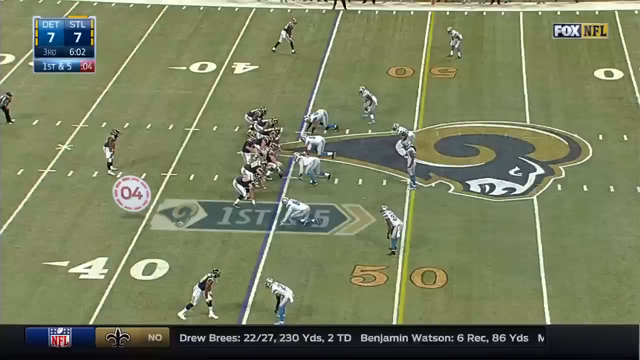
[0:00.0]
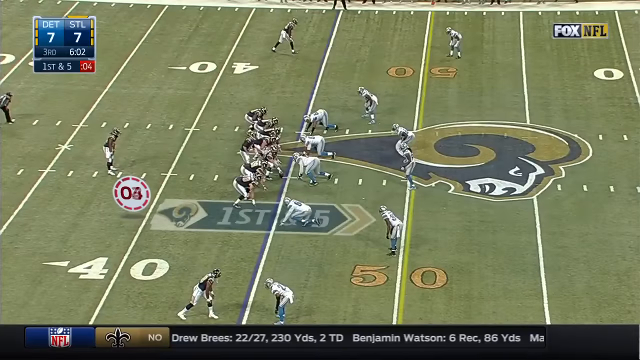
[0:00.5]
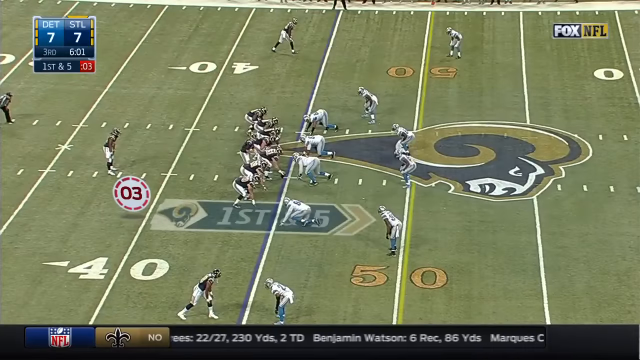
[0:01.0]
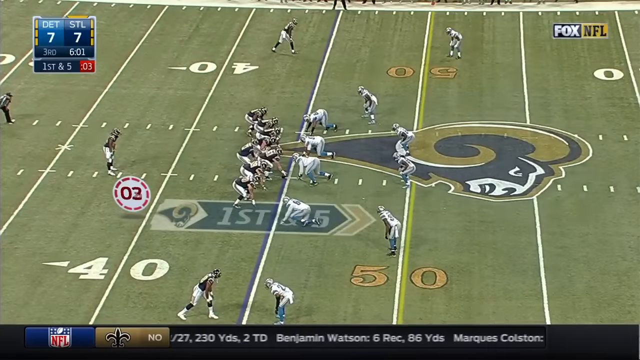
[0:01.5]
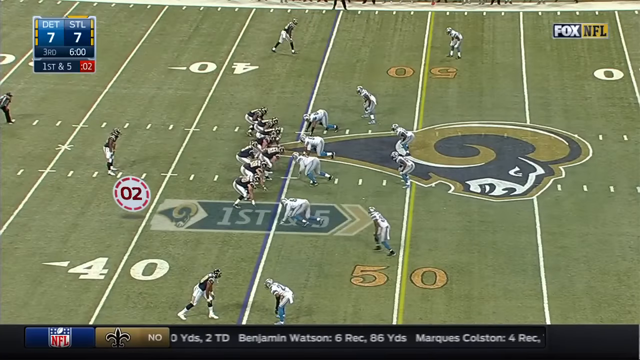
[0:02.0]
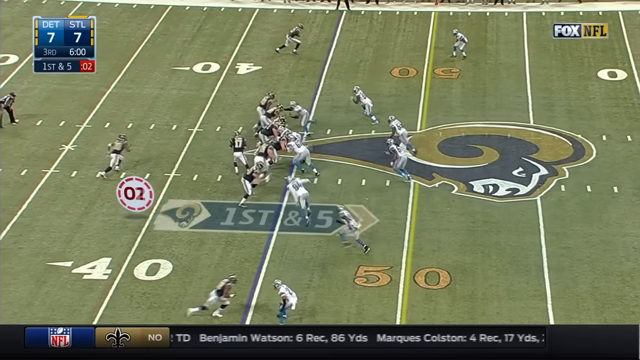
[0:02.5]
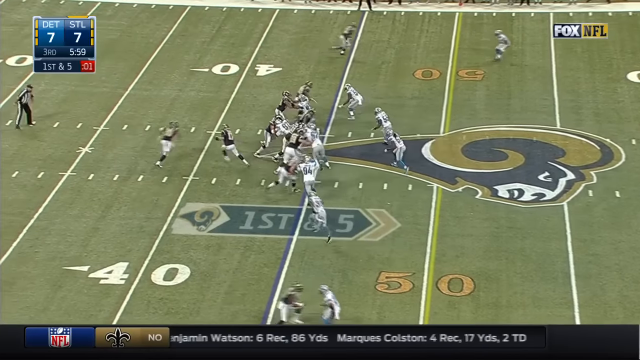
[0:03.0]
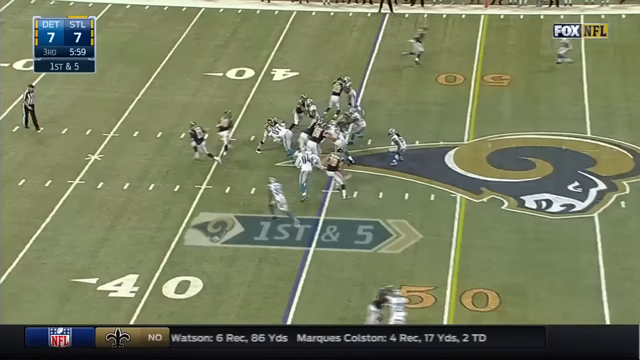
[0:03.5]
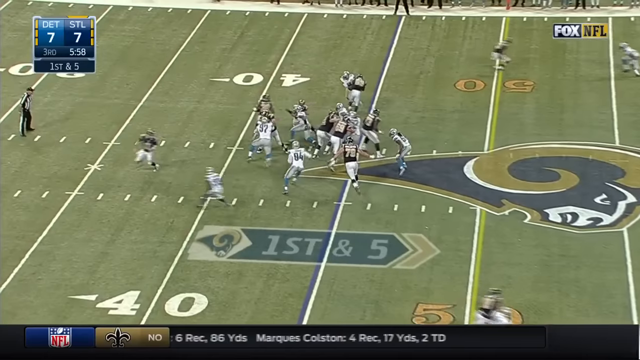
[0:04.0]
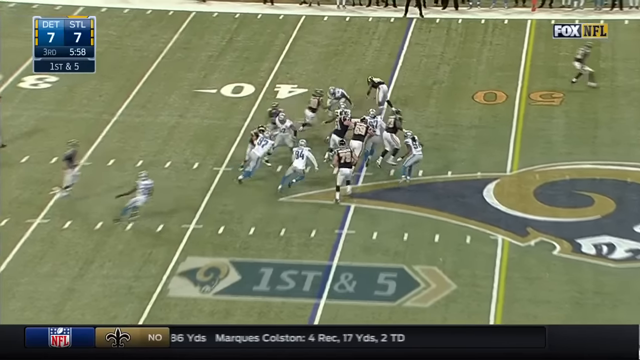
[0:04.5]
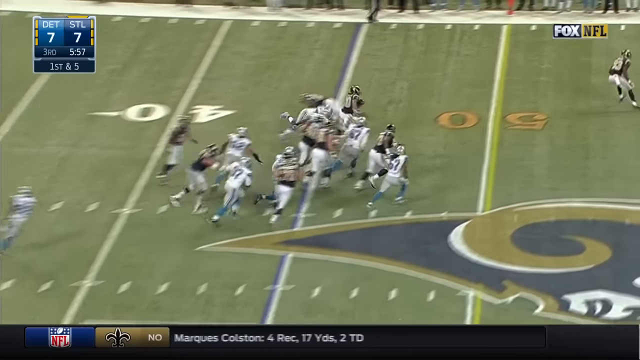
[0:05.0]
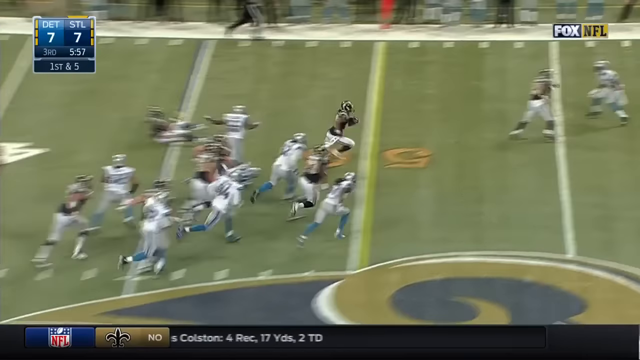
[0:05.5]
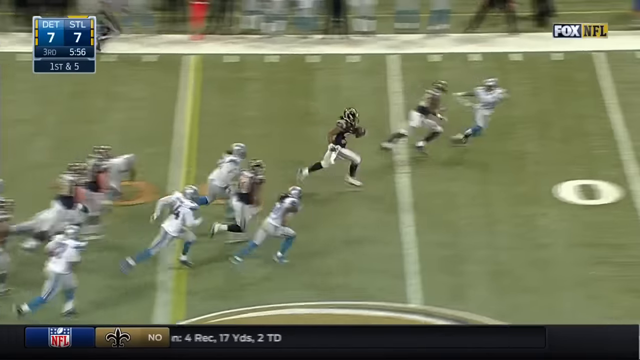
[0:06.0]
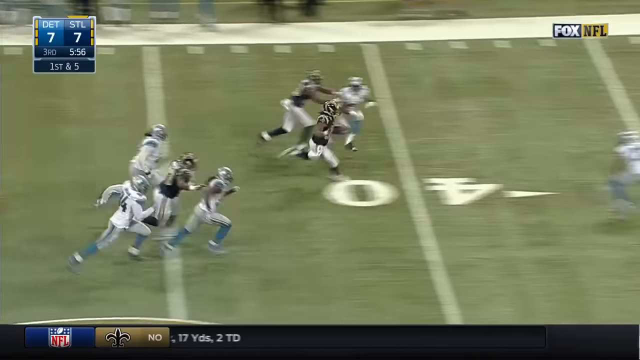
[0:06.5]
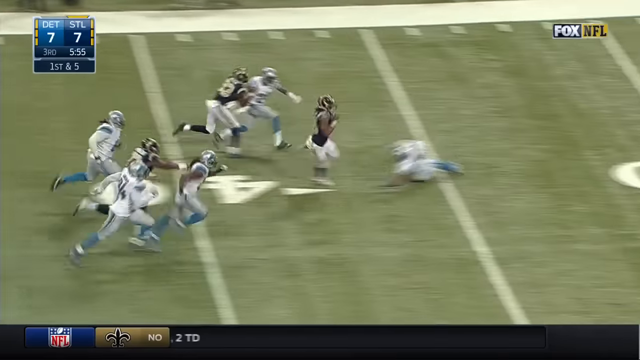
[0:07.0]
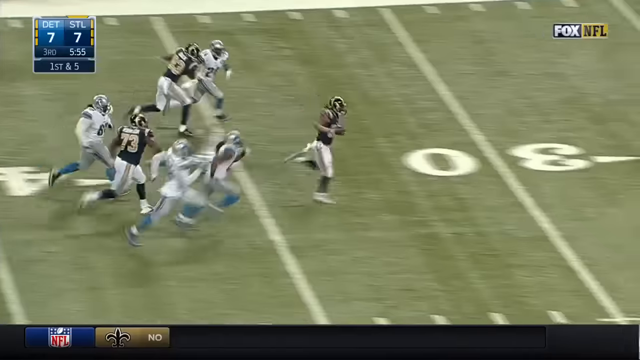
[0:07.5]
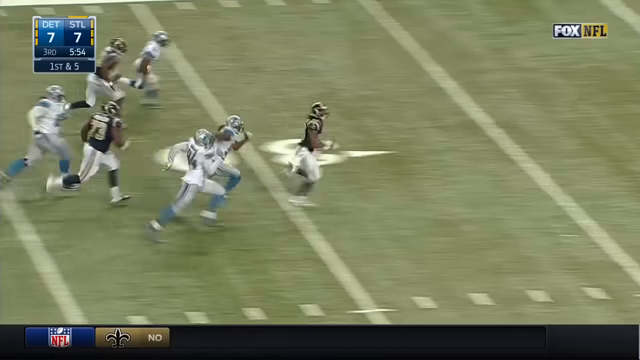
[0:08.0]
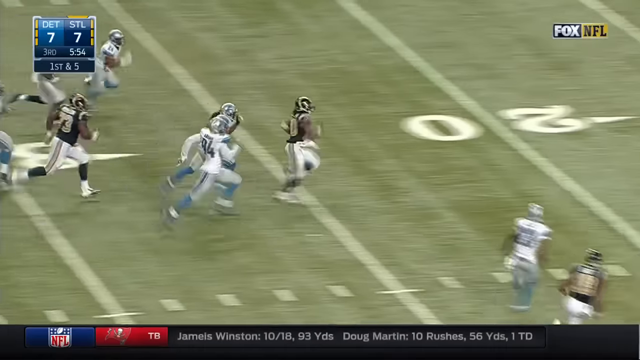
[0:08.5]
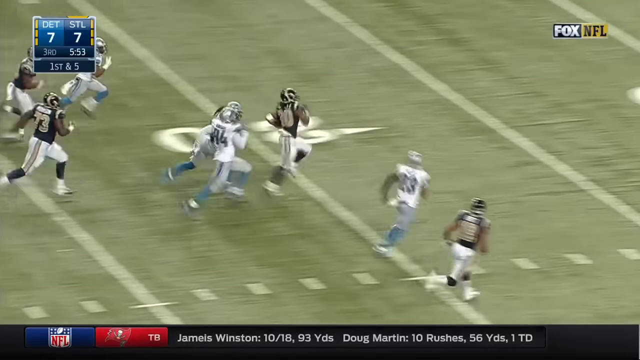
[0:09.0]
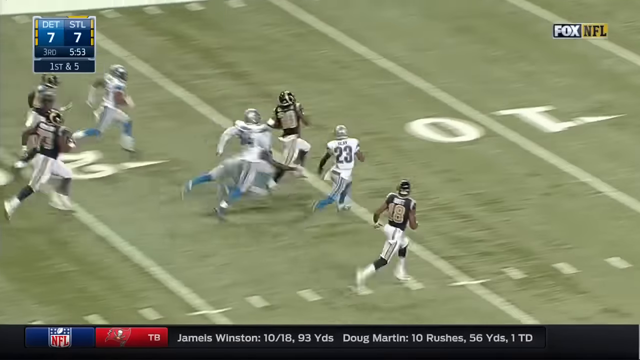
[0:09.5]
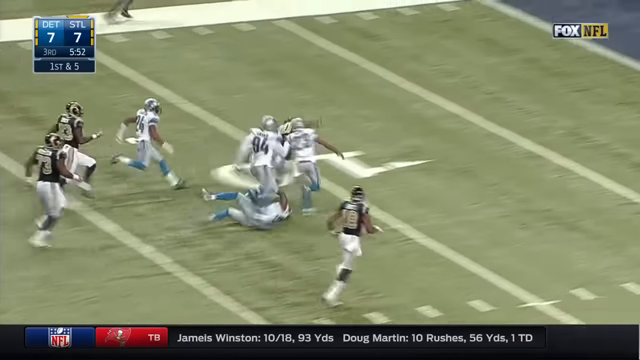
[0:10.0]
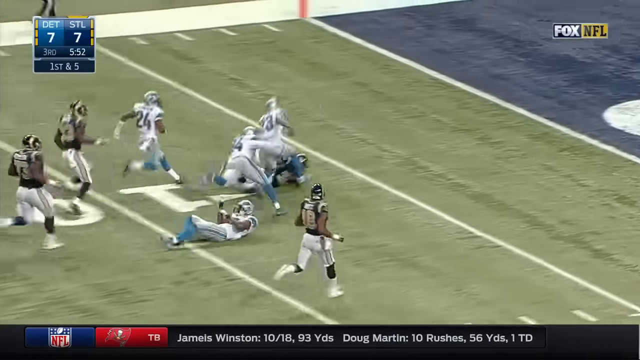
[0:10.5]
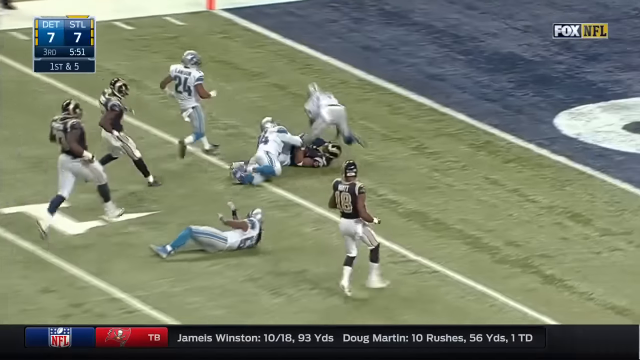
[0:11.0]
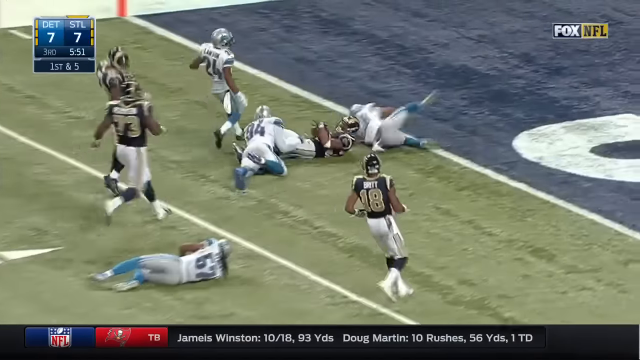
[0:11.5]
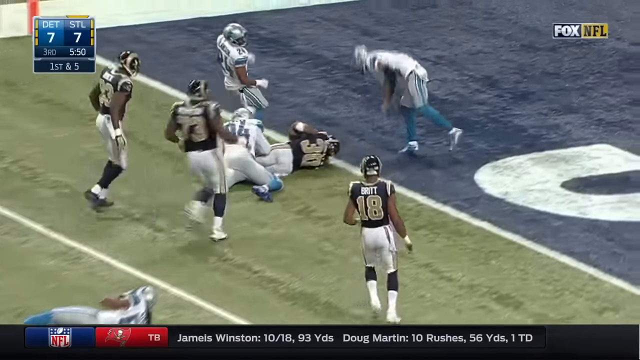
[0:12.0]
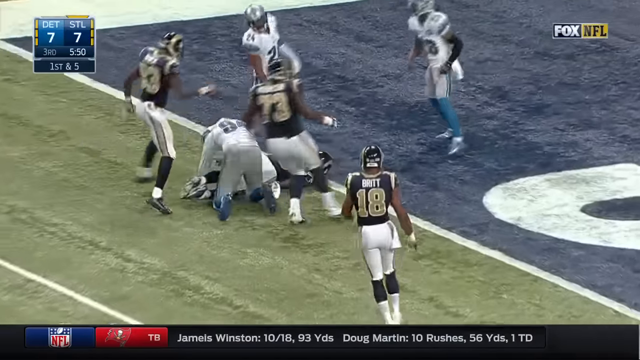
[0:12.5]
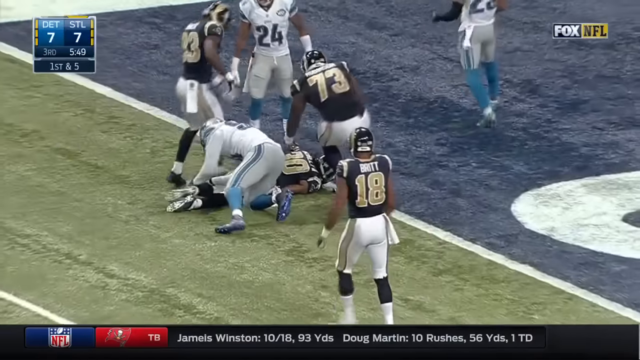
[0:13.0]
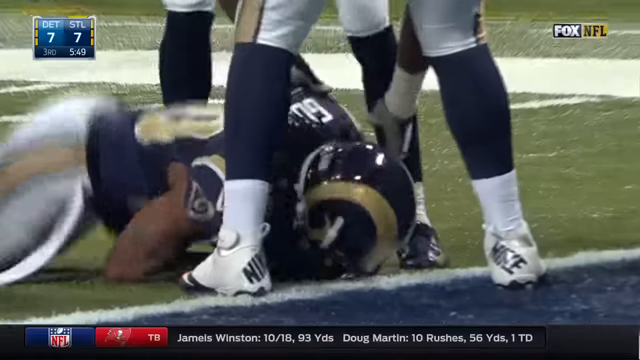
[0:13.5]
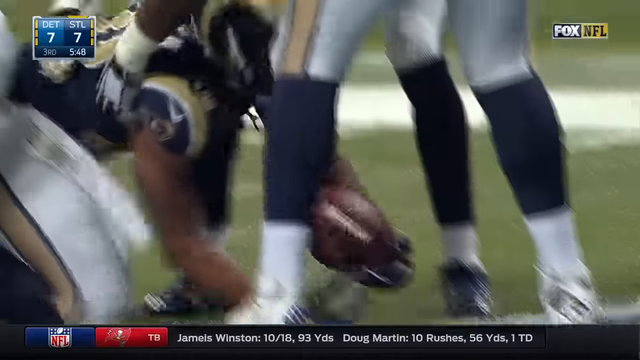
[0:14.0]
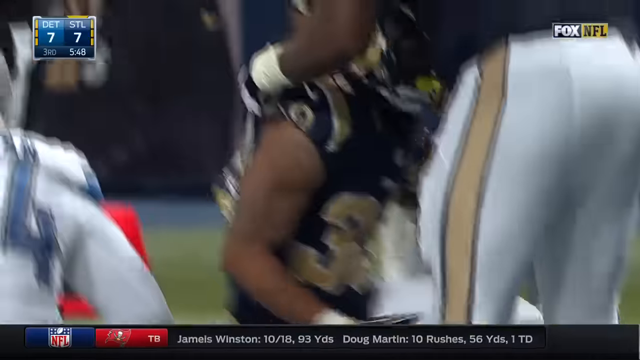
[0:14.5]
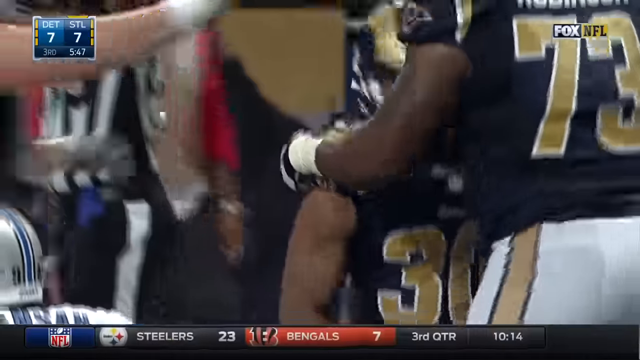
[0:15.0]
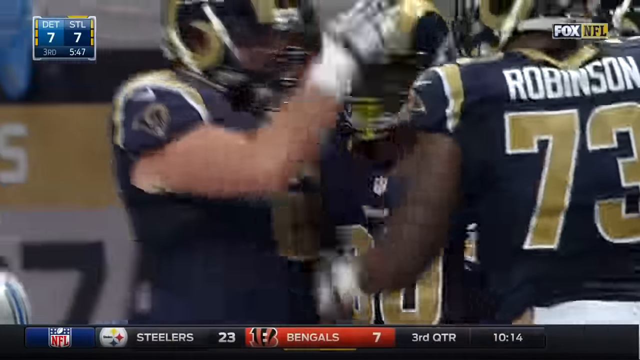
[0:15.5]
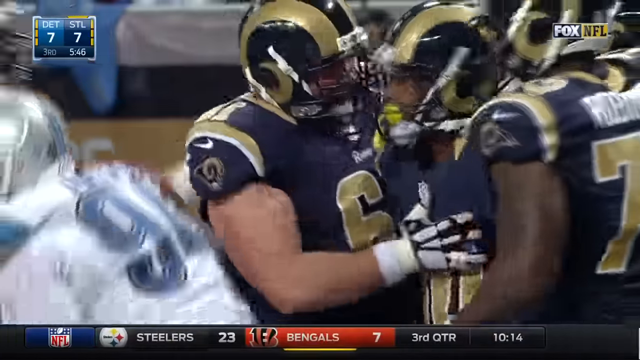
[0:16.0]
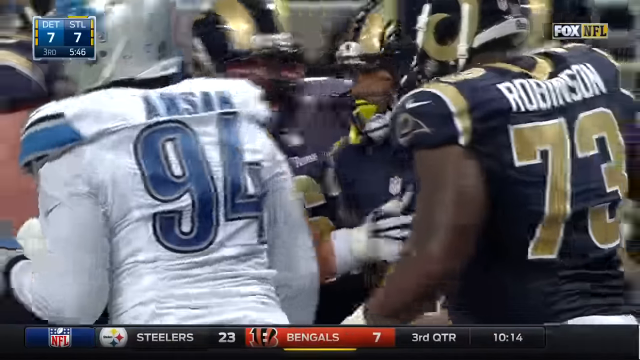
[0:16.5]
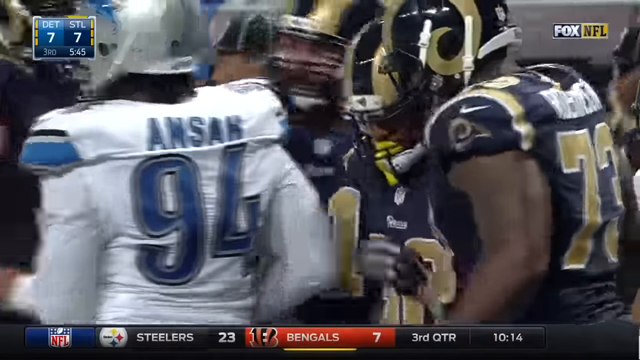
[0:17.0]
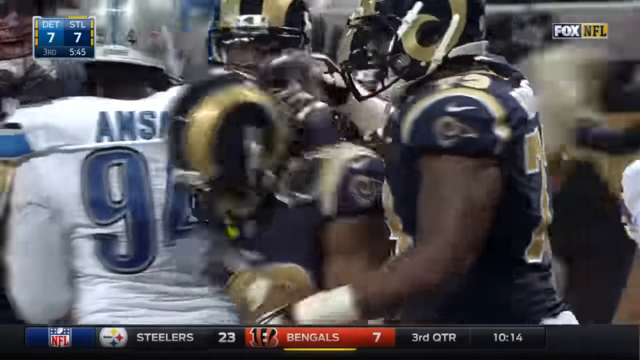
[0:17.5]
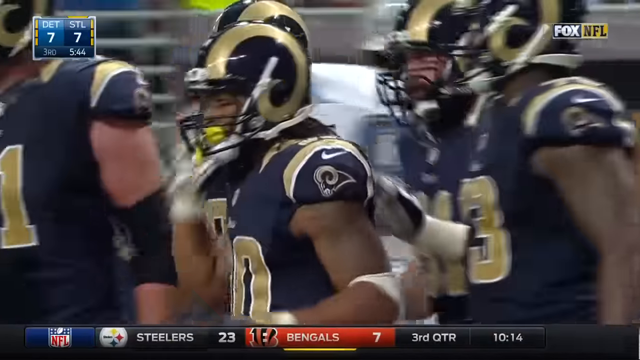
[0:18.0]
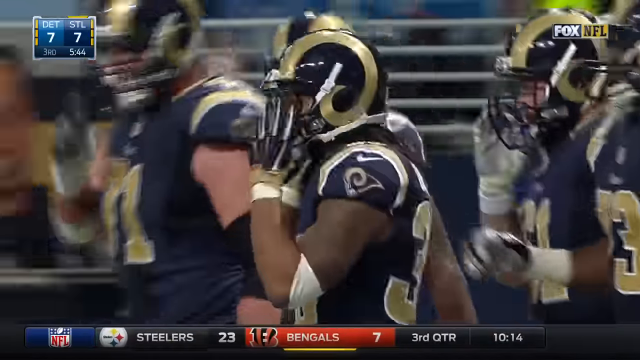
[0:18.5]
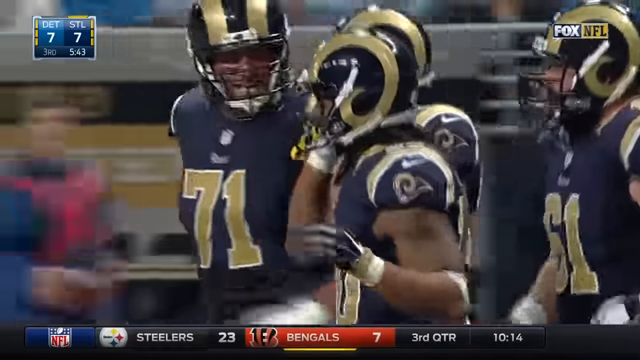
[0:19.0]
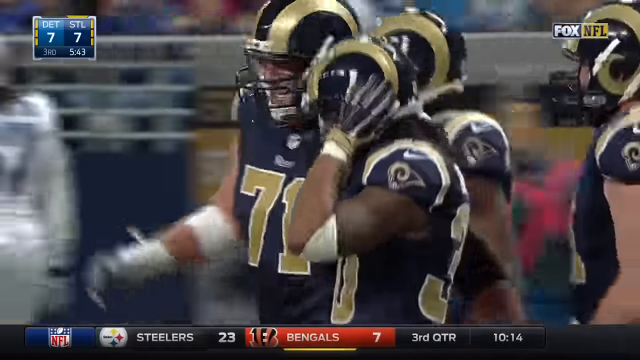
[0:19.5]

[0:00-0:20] Two football teams face off, one in white and blue and one in black and white. The score is 7-7 in the third quarter with six minutes left. The black and white team kicks off and passes the ball off to one of their players, who runs through the left side of the white team's defense and breaks away down the left-hand side. He jumps over a player who seems to slip and fall while trying to position himself for the tackle. A player in white and blue makes a last-ditch long dive to take him down, but the runner just about makes it through. He gets hit by the second player, and the team celebrates; it looks like he makes it to the touchdown just in time before being taken out, a close call. The play is a pass-off run to the left, after which the runner explodes past one player on his left and six players on his right, dodges an attempt, and sprints all the way through for the touchdown.